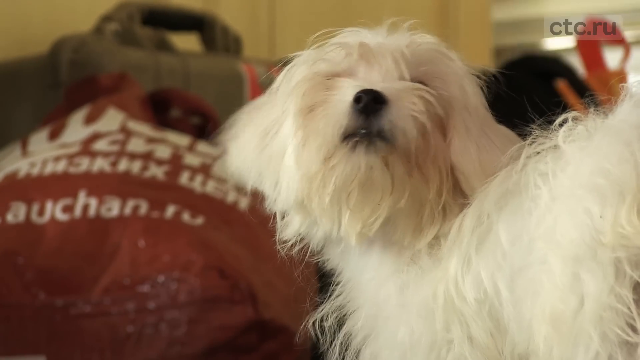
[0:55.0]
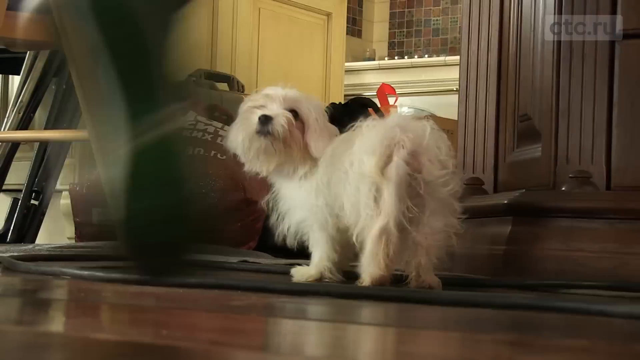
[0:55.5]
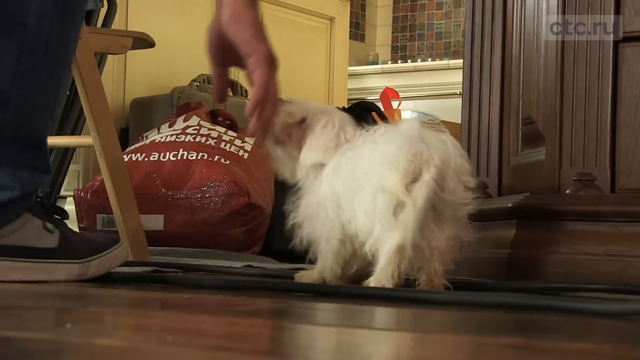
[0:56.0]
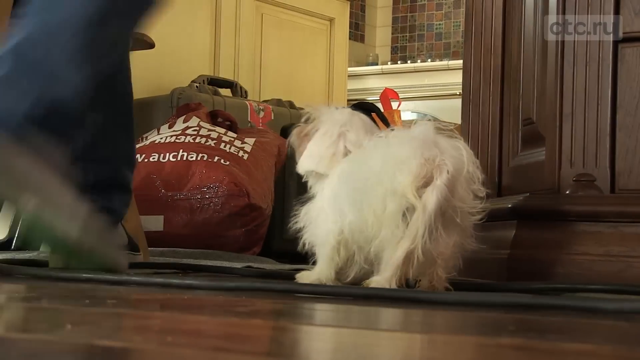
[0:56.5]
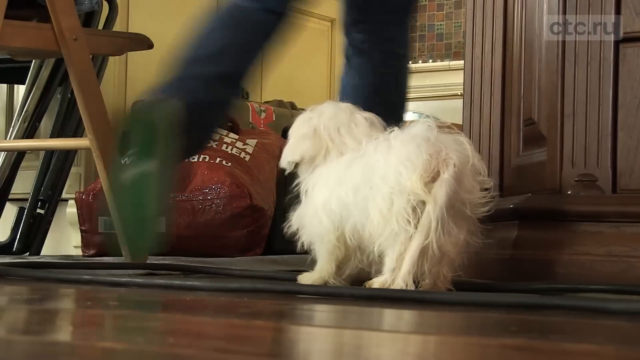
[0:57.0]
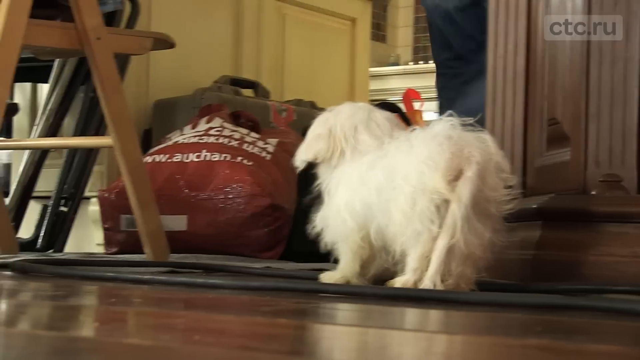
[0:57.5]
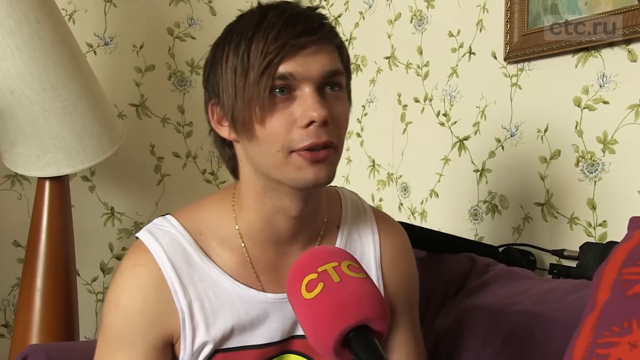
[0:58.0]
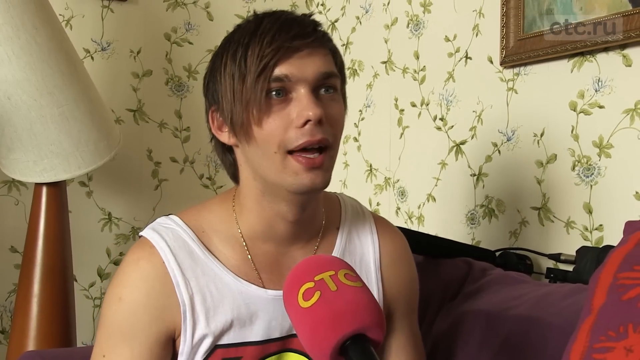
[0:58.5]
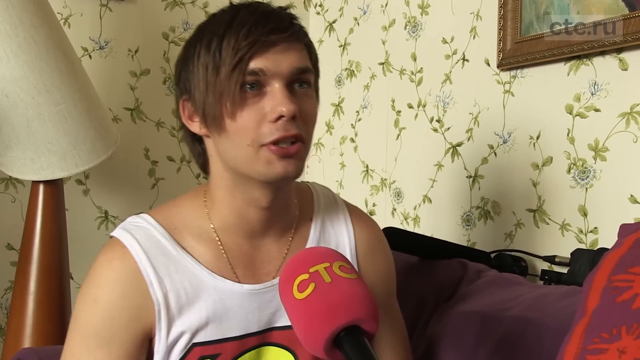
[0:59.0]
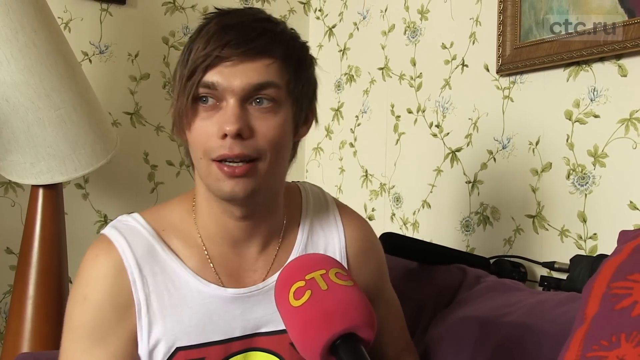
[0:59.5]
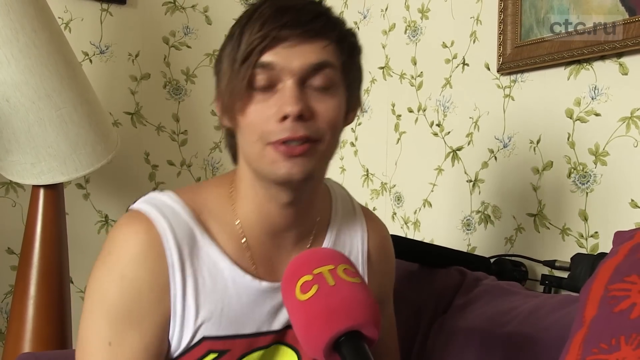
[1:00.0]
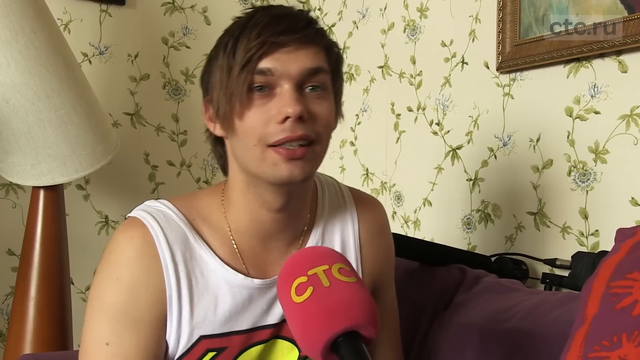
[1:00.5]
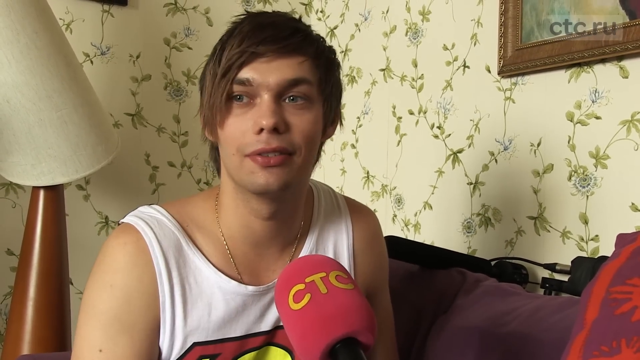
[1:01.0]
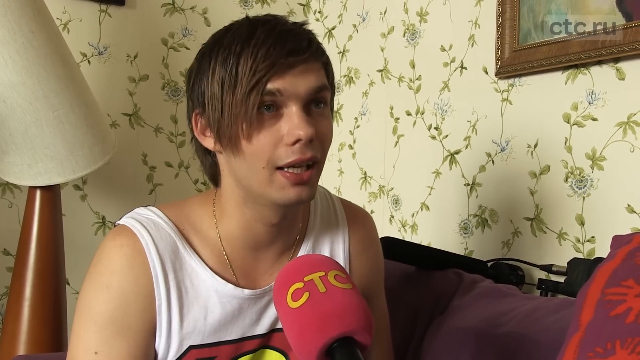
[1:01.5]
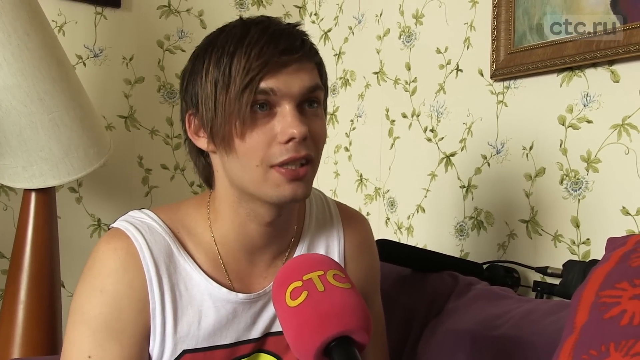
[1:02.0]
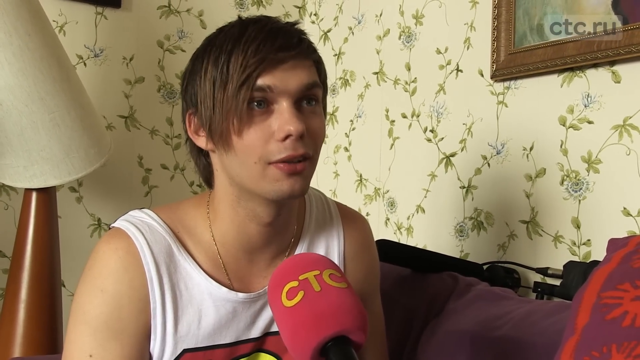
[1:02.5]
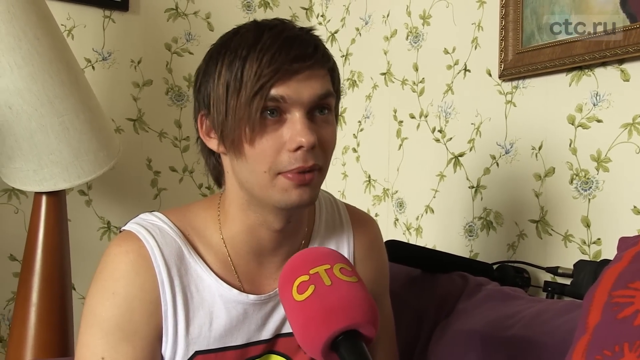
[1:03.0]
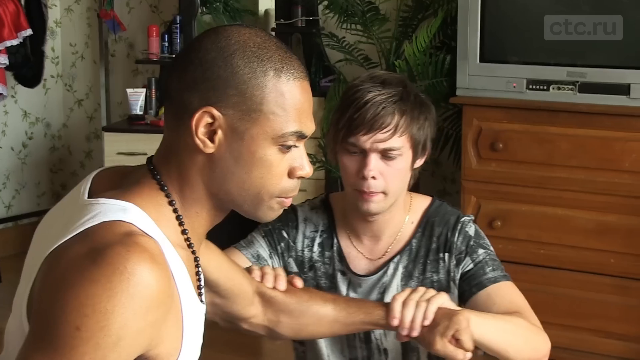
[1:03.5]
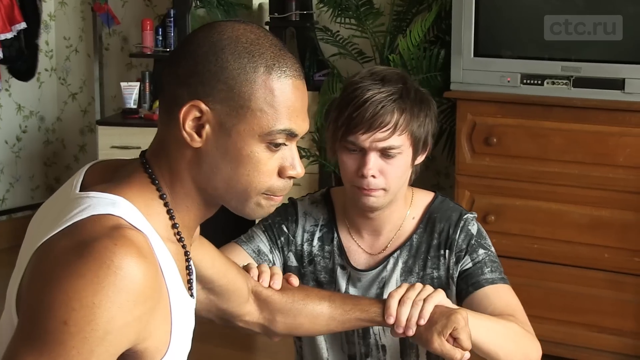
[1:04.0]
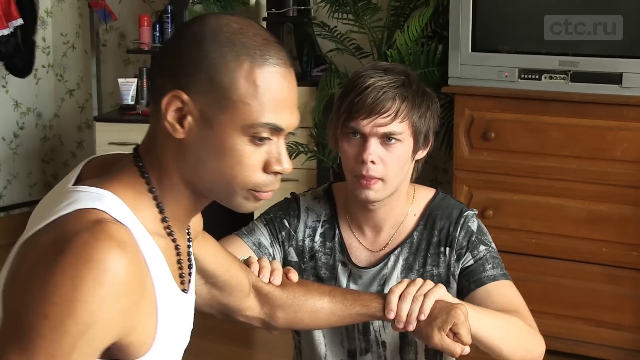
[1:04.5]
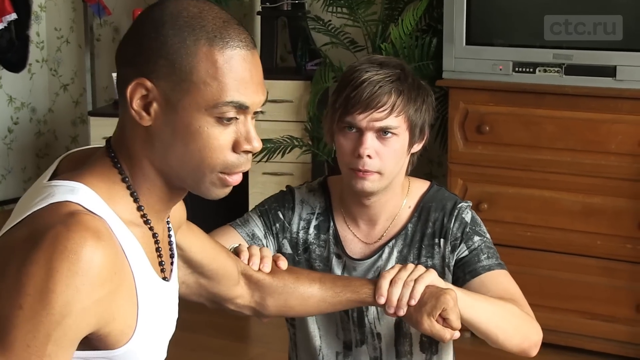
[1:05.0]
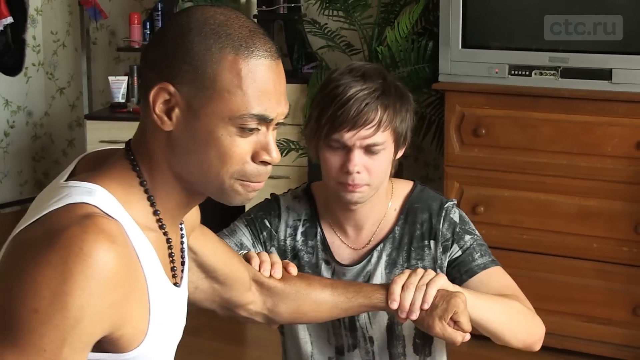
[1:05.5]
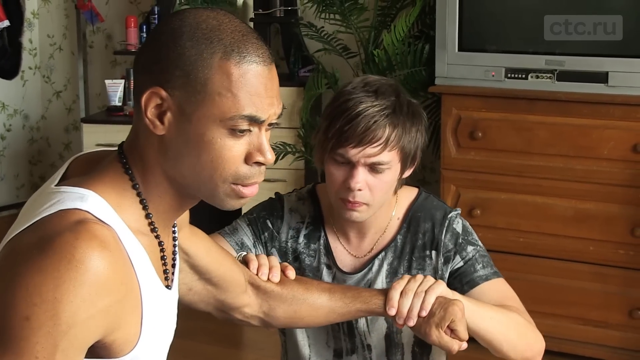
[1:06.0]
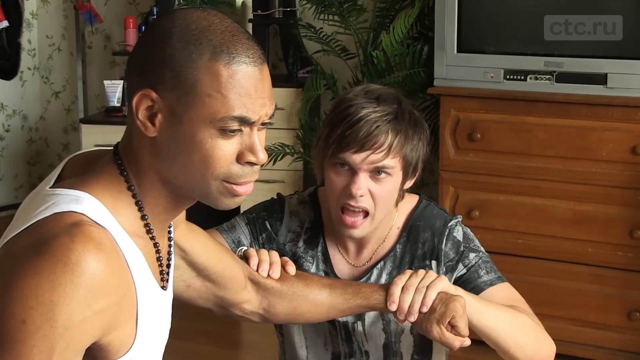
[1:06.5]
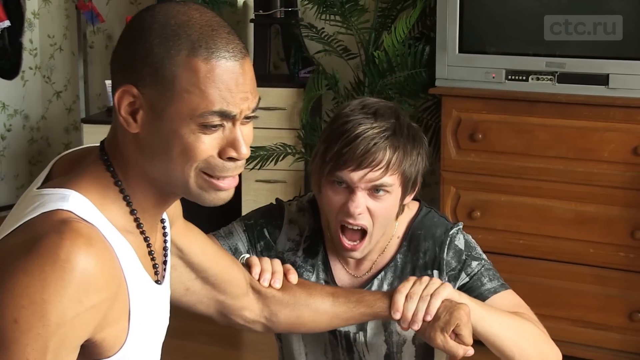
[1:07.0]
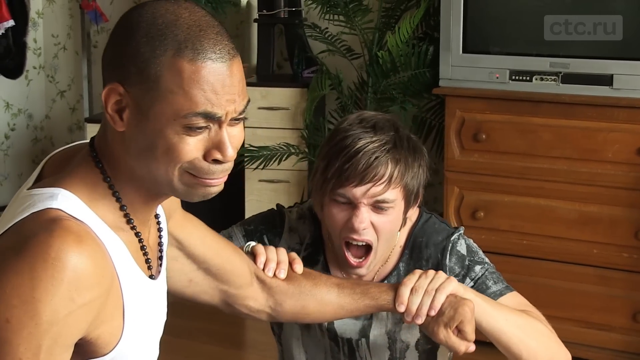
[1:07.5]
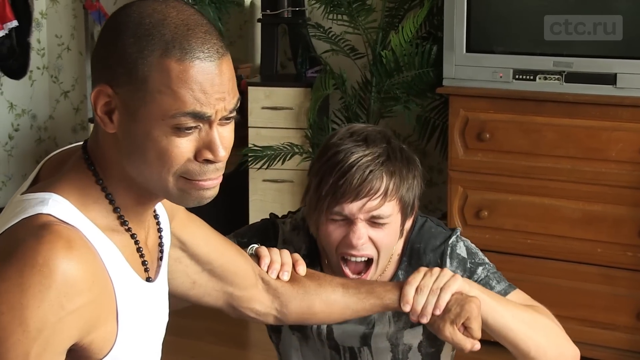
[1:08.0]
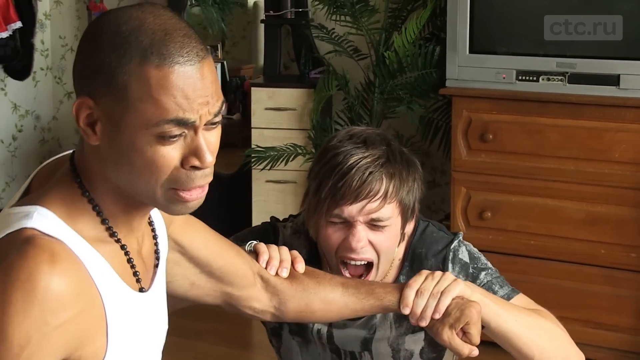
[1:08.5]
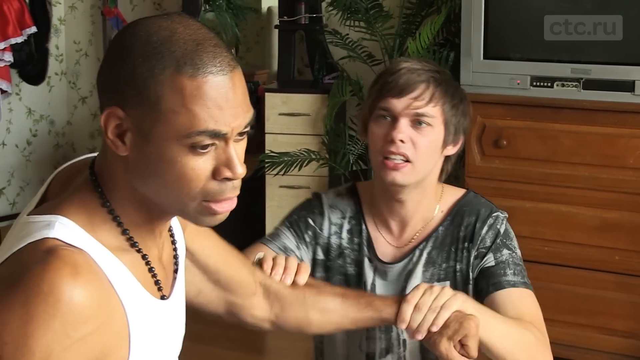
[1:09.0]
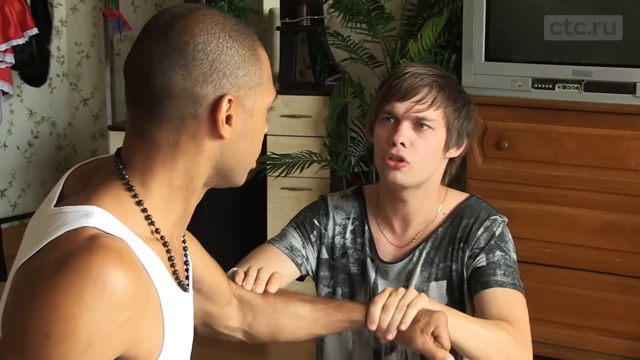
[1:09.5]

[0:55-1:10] A white dog is on the floor and somebody walks by it. The white guy in the Superman shirt sits on the couch, interviewed with a CTC microphone. Then what looks like a scene from the show begins: he is about to bite another guy but doesn't, and that guy looks willing to be bitten. That guy is sitting on the bed wearing a tank top, and the other wears what looks like a camouflage shirt. An old TV is in the background on the set, and no crew is visible.